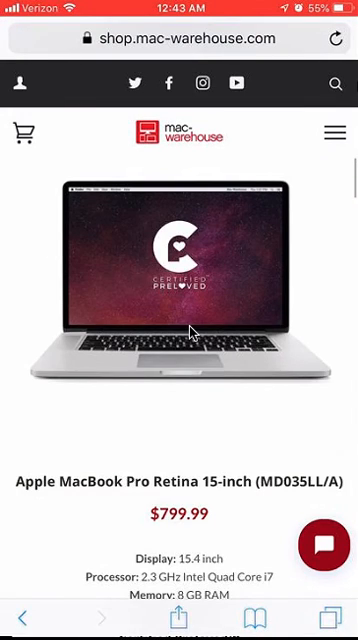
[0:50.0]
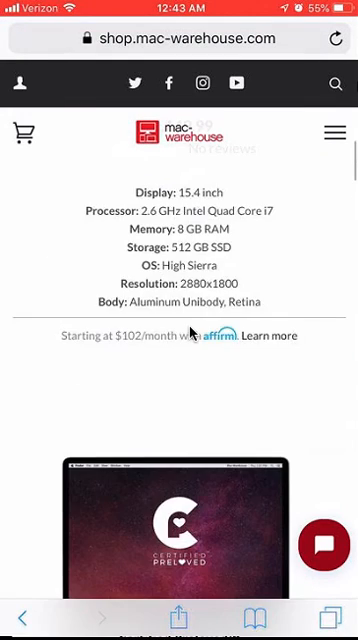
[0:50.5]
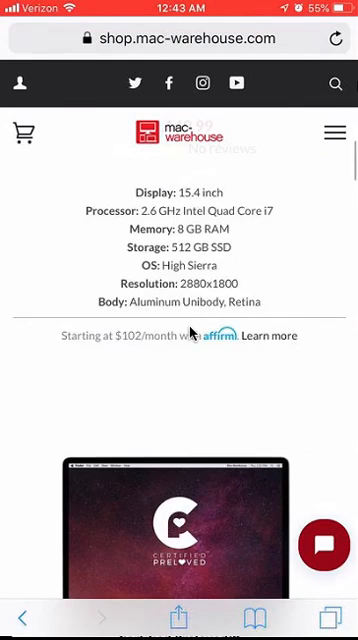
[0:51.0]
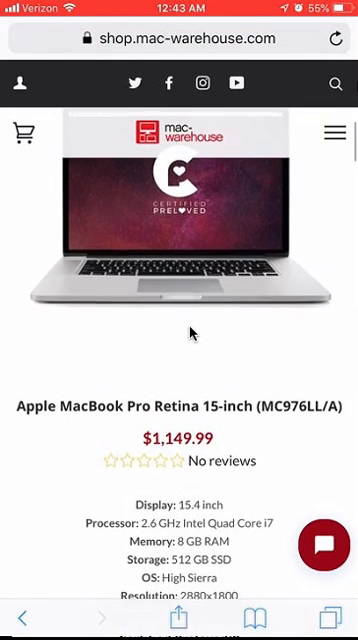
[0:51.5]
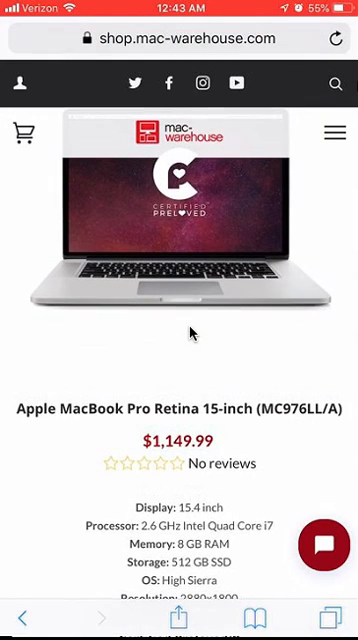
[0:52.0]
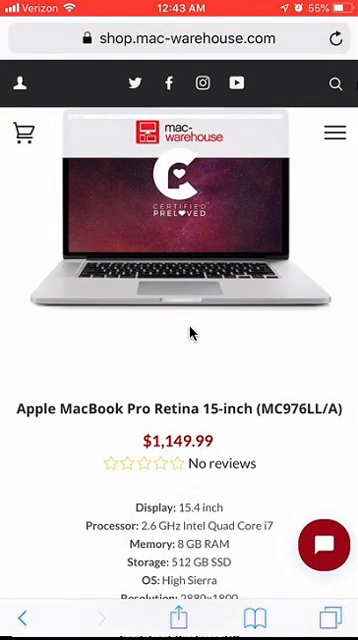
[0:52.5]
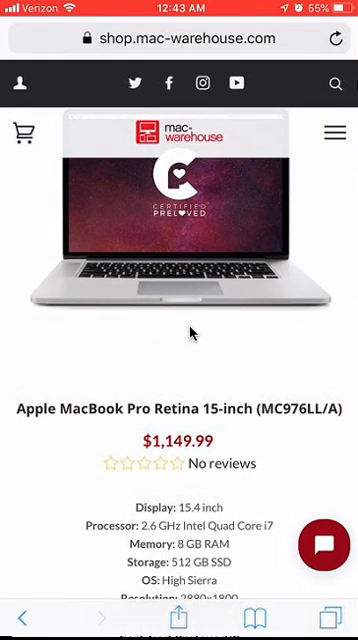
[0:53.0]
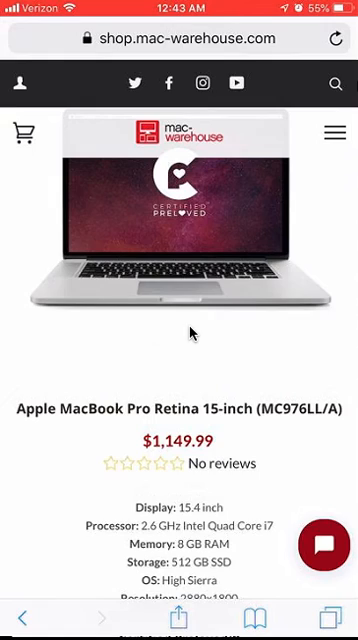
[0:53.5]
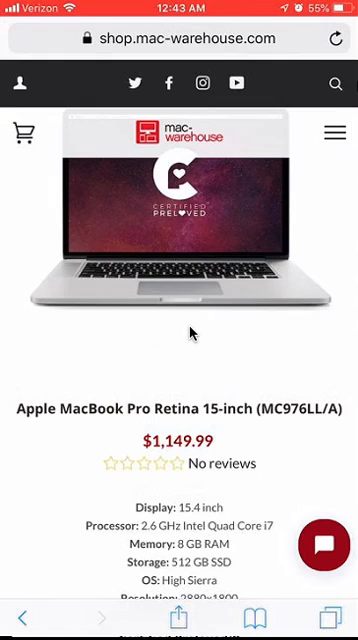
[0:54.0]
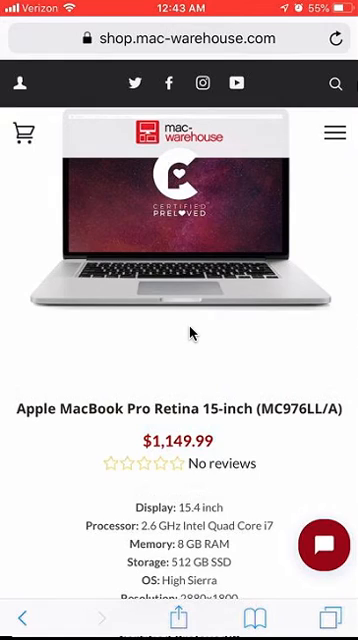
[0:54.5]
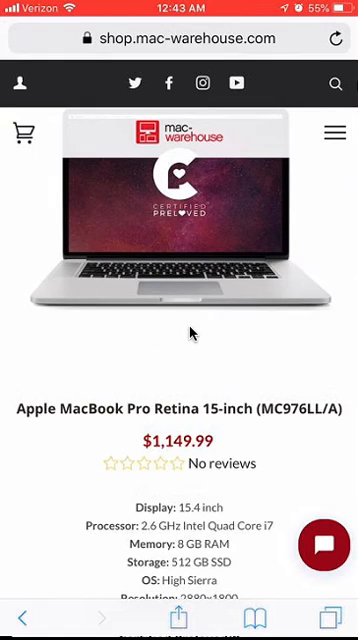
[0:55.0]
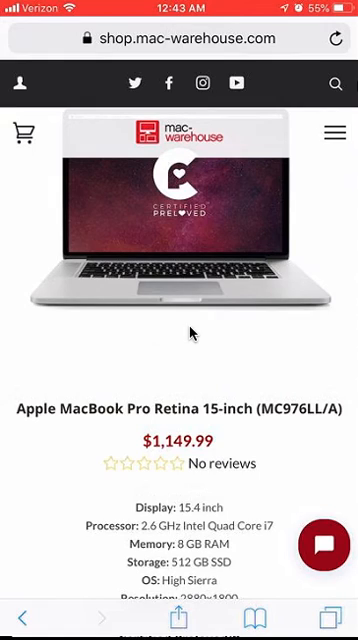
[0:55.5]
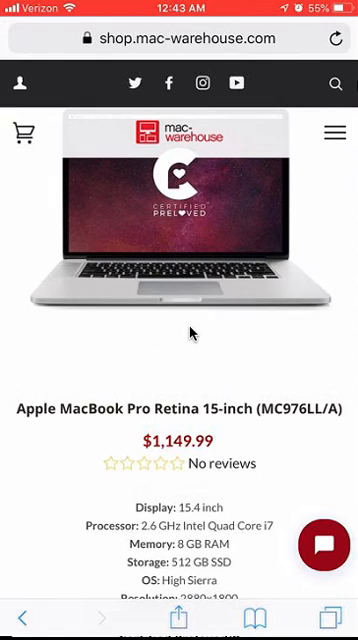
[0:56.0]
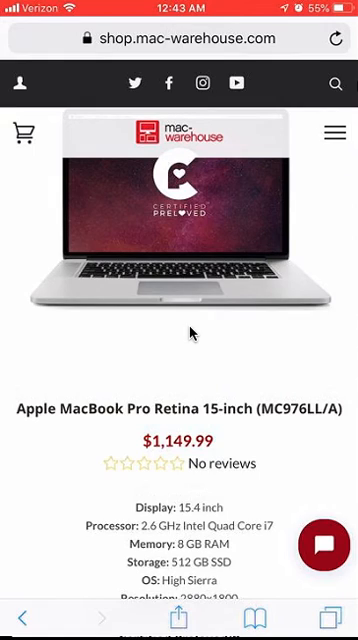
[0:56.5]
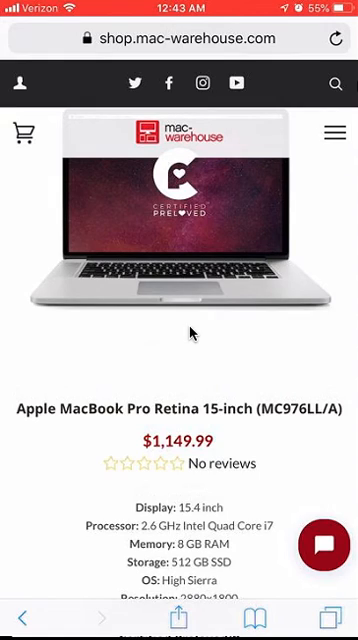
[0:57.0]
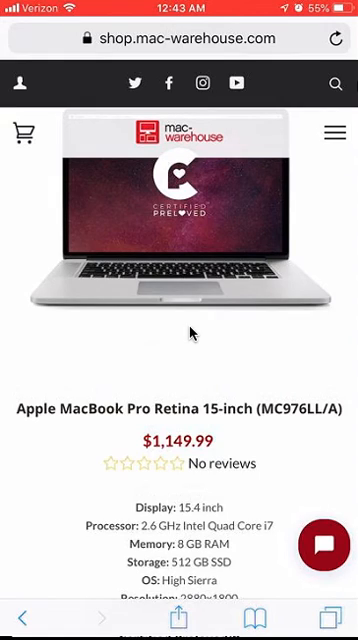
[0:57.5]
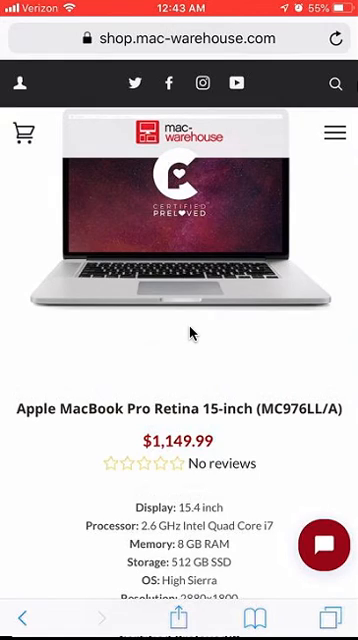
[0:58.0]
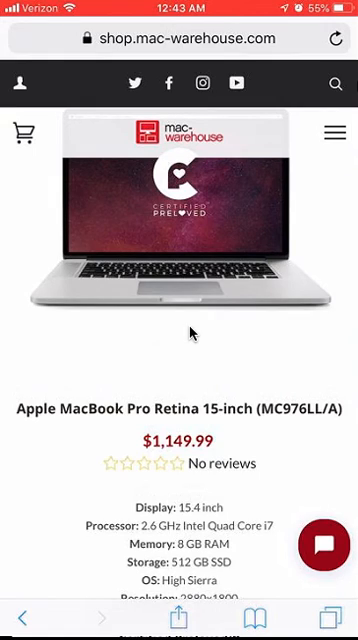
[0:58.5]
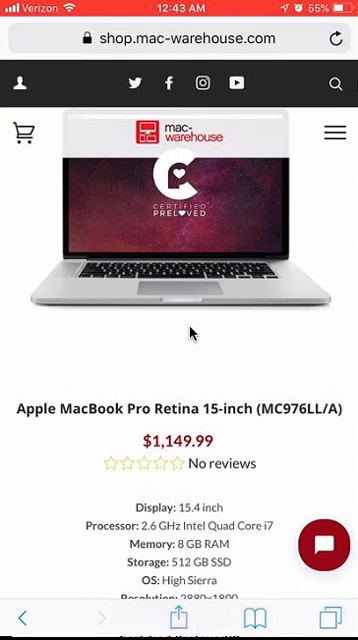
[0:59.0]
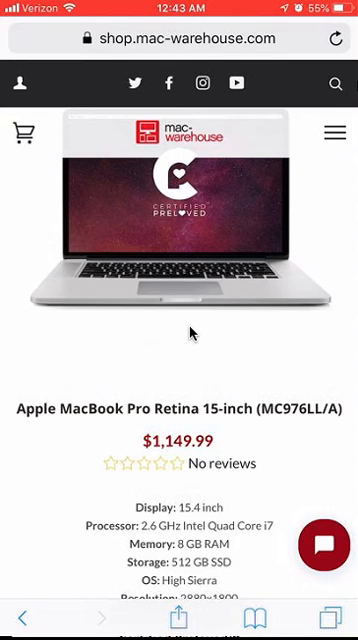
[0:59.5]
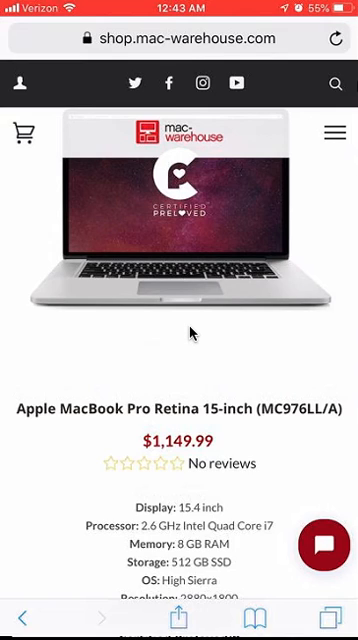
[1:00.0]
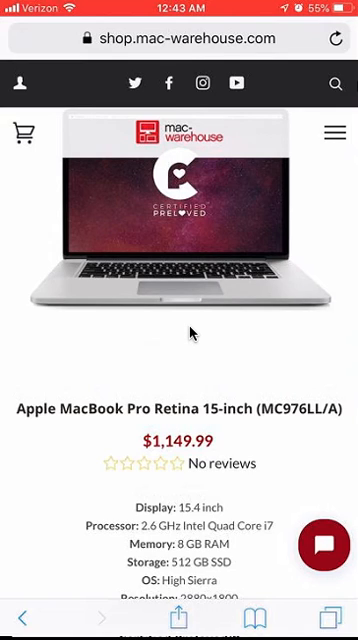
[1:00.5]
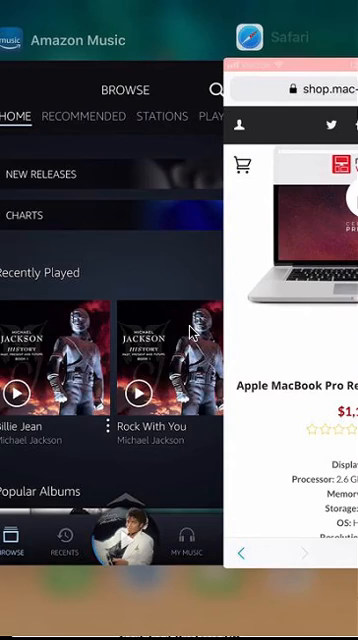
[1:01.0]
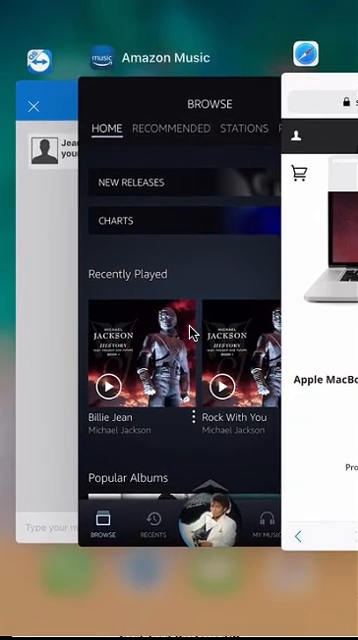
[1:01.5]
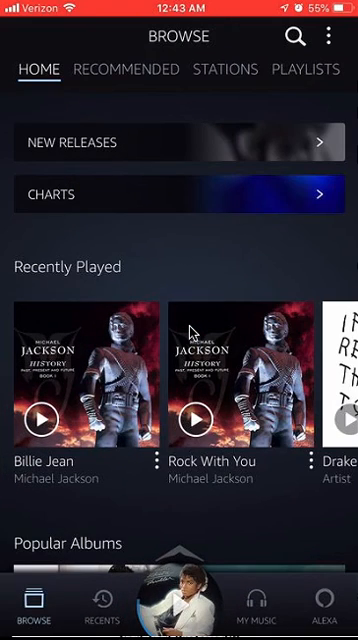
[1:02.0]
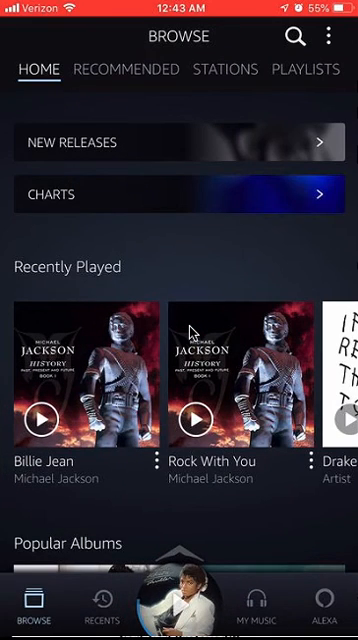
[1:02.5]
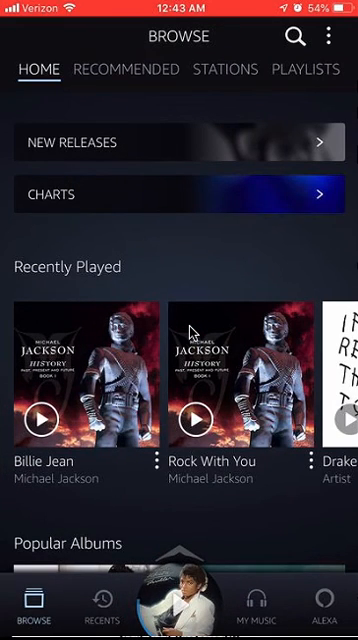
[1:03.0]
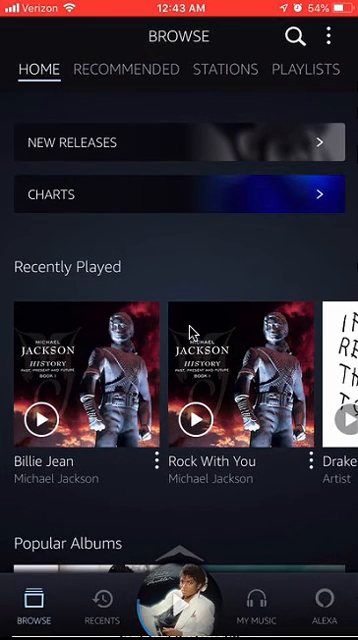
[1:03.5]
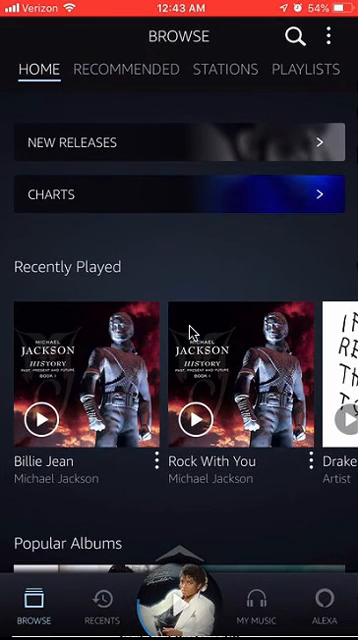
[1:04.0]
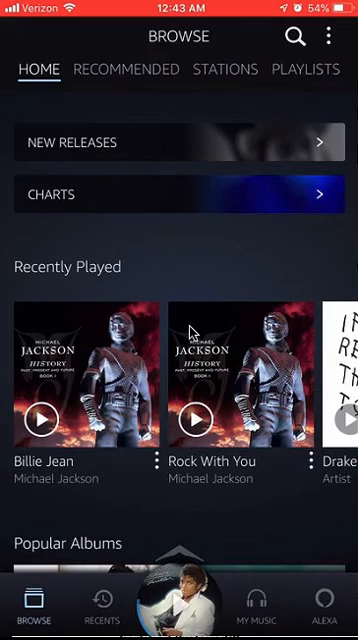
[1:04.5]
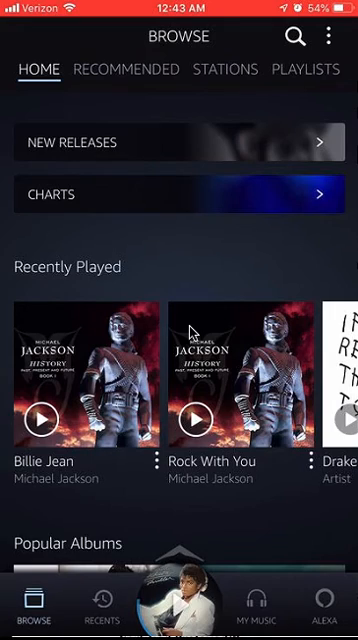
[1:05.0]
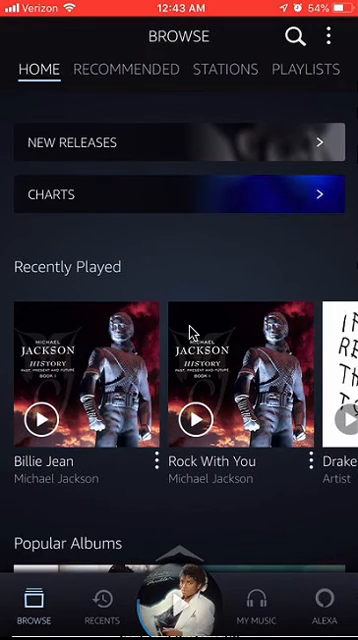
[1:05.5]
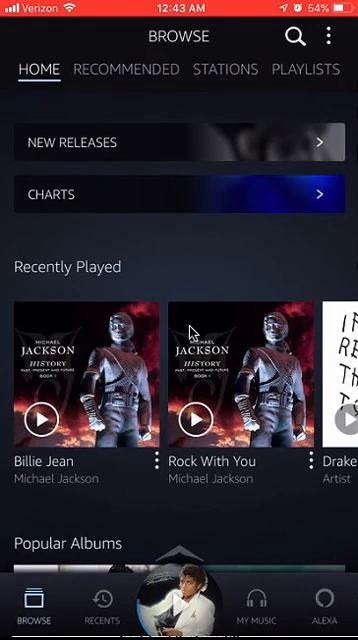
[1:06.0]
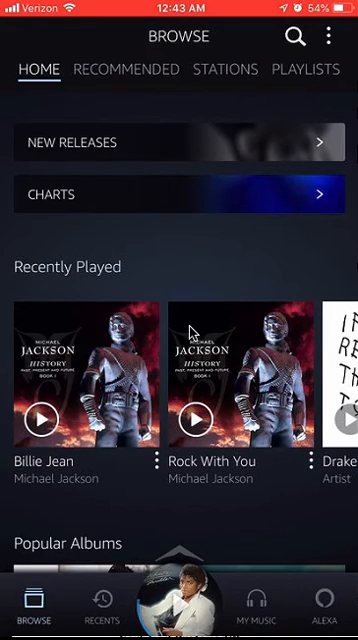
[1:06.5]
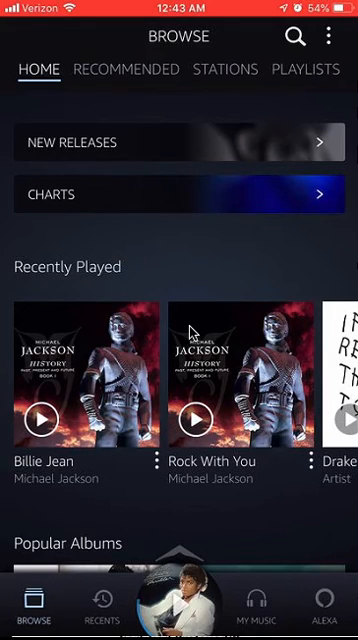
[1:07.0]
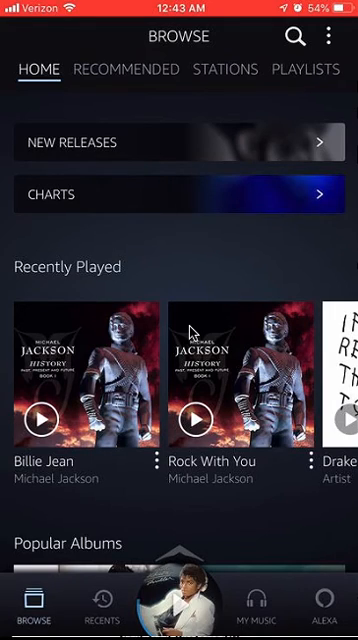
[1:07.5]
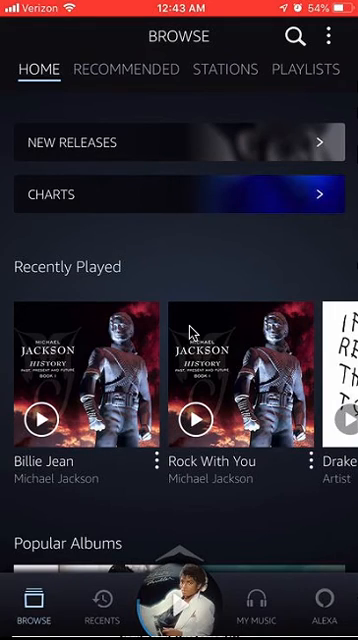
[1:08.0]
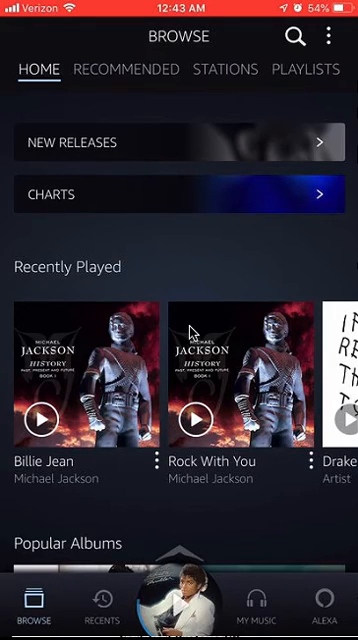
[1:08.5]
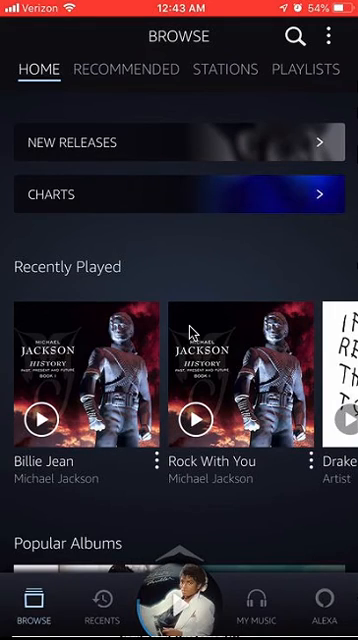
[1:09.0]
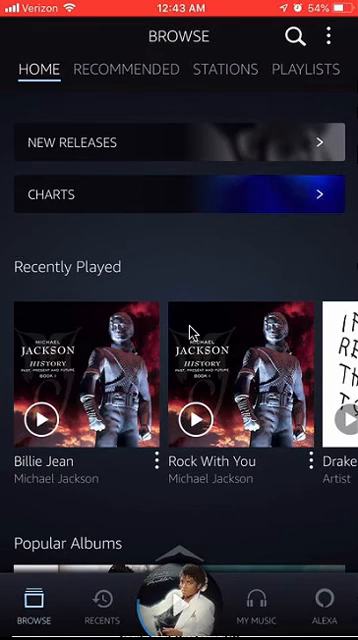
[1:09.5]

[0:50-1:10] On the shop.mac-warehouse.com website, the user has been scrolling through electronics to buy and is now looking at an Apple MacBook Pro Retina 15-inch currently priced at $1,149.99. It has no reviews, and its details list a 15.4-inch display, a 2.6 gigahertz Intel Core i7 processor, 8 gigs of memory and a 512-gig solid state drive. The user then appears to go back to the music site, which shows his most recently played music: Michael Jackson's Billie Jean, Michael Jackson's Rock With You, and apparently a Drake song. There are also options to look at new releases, different radio stations, and to create playlists.